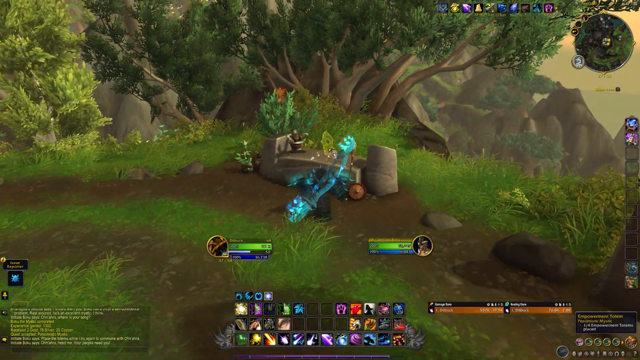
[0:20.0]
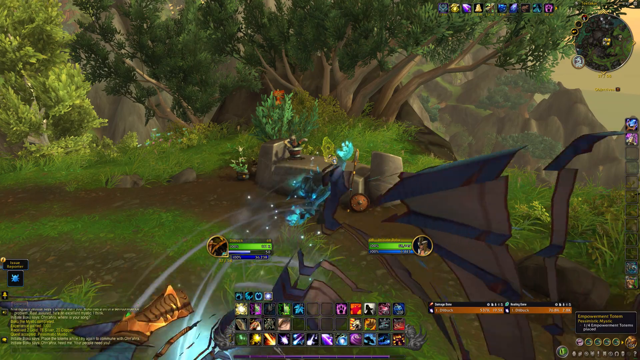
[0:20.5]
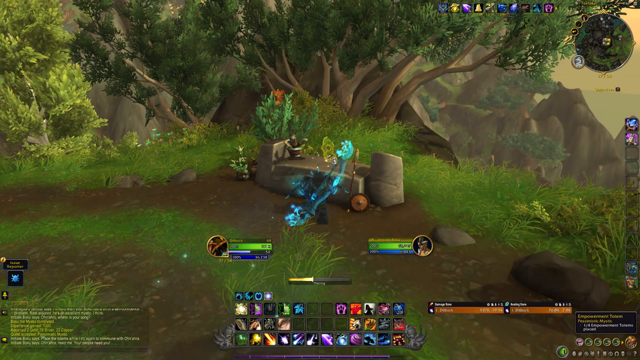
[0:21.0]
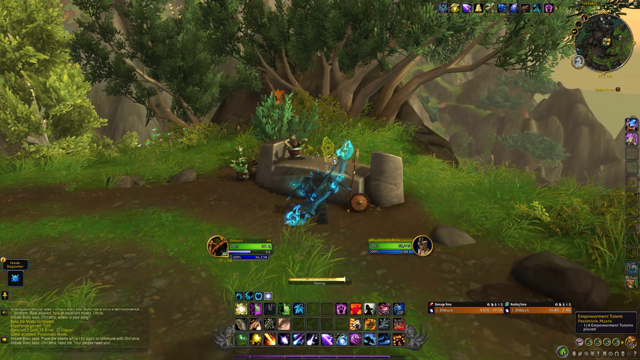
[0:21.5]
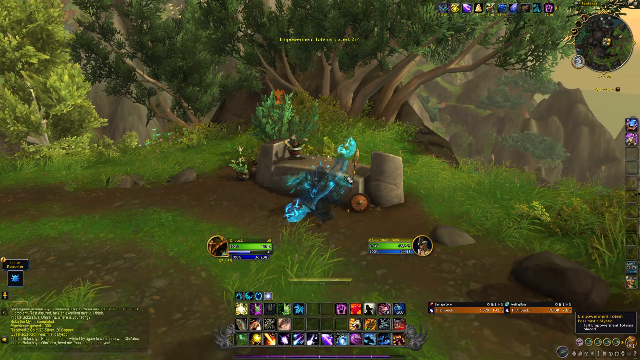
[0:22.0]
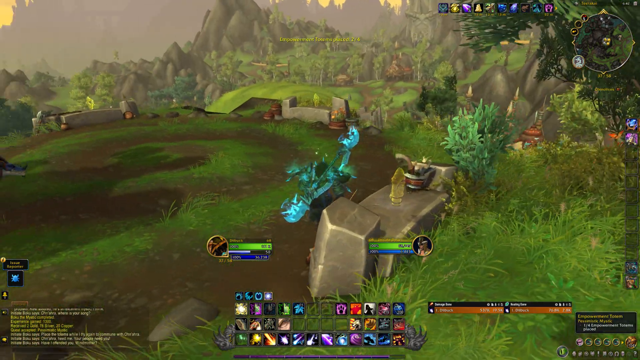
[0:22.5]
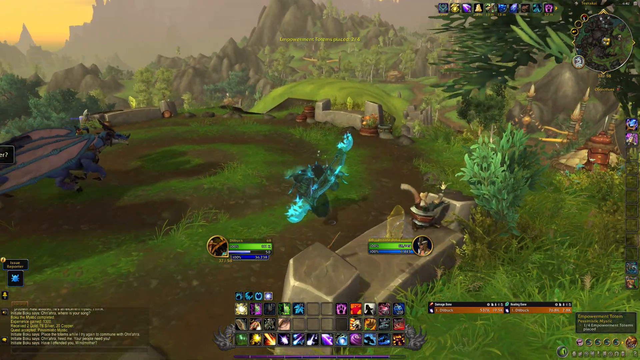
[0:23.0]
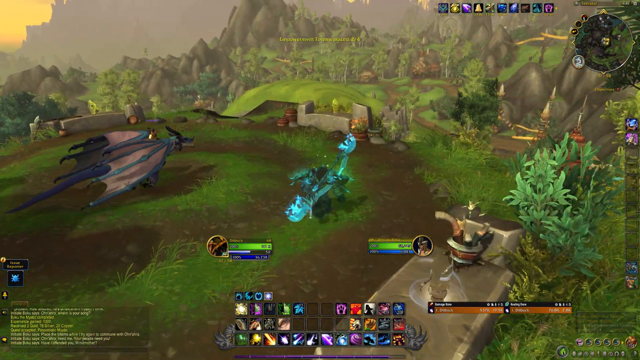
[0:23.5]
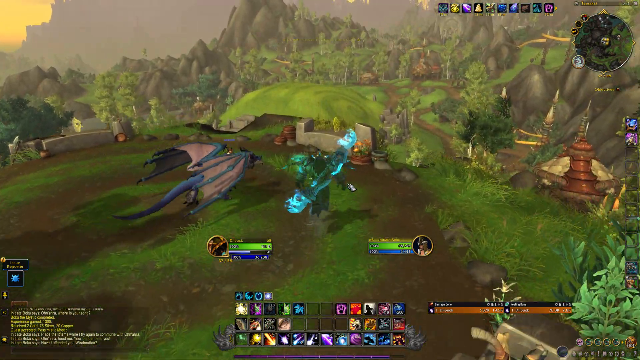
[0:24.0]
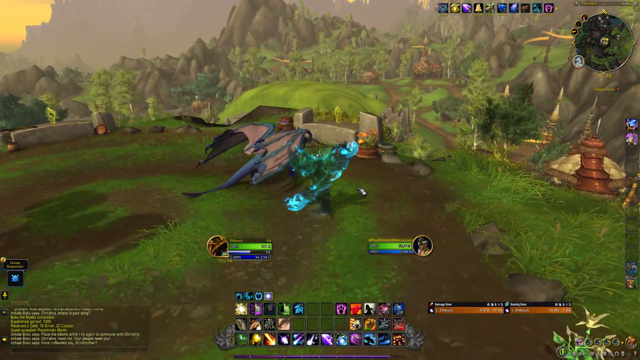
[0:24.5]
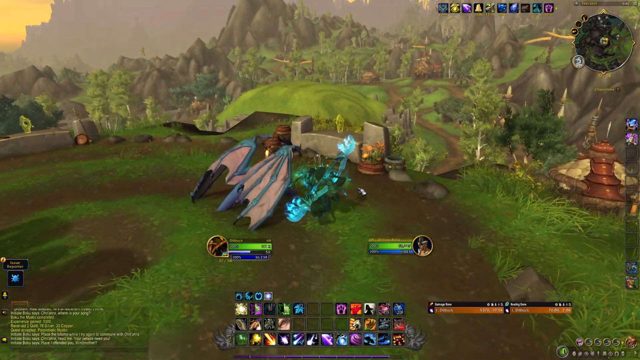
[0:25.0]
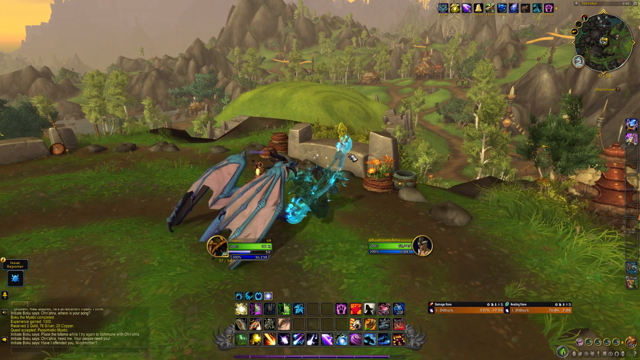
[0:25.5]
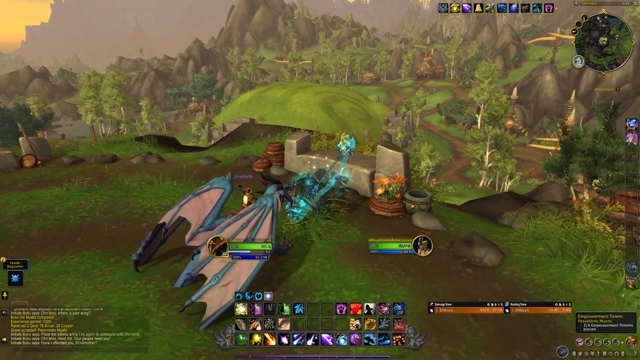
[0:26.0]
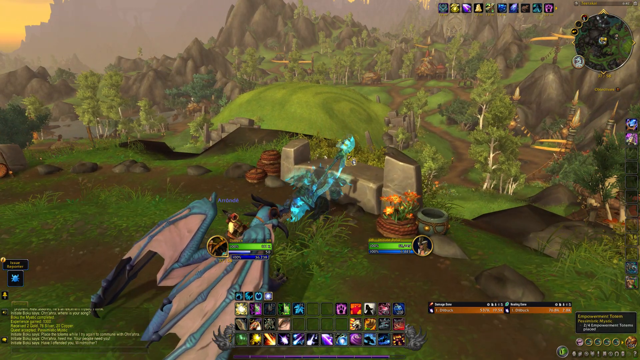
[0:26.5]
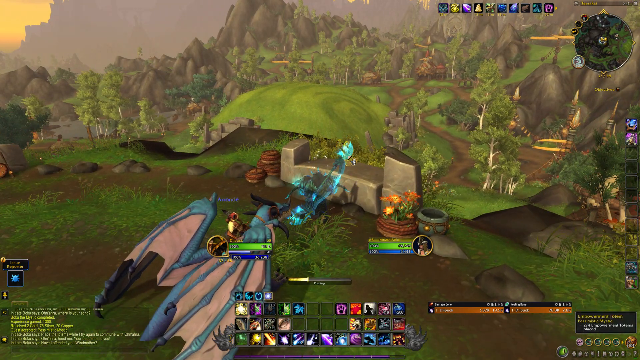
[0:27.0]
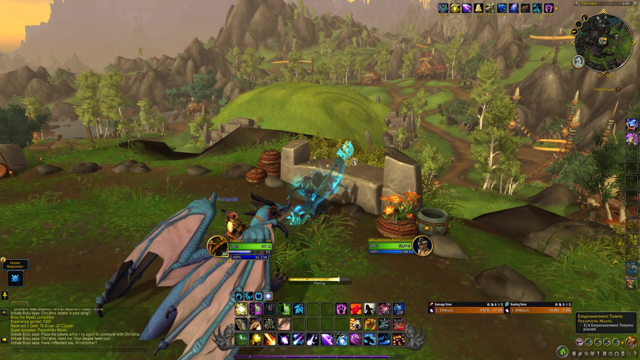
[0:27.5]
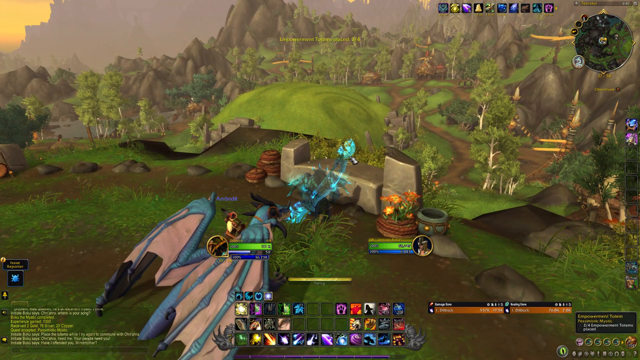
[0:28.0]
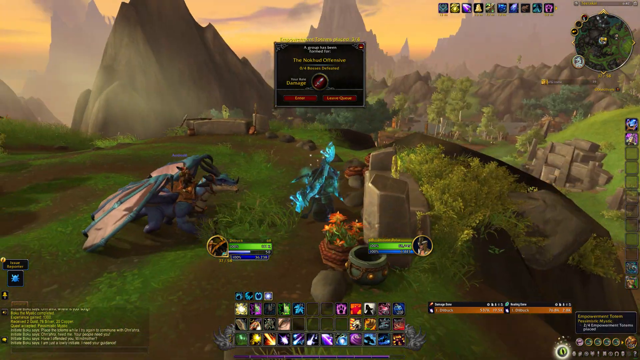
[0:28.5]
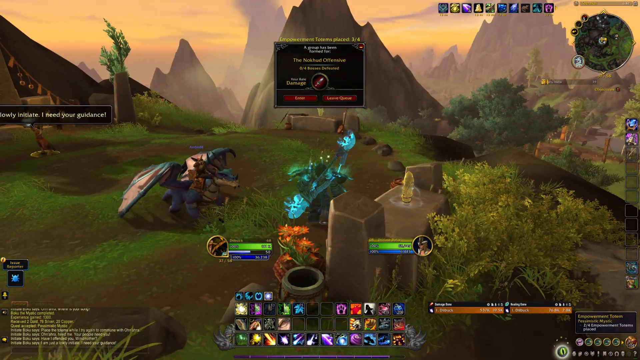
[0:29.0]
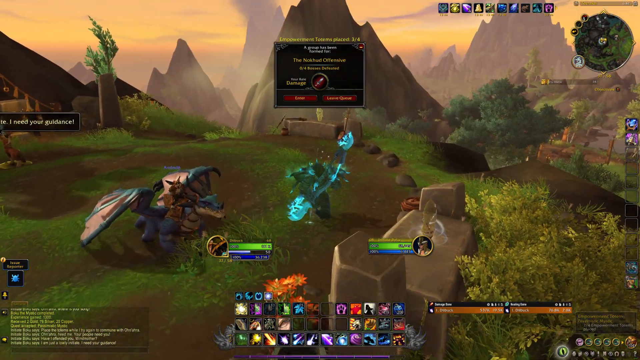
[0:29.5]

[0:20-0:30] The player starts at what appears to be the altar and appears to be taking stuff from it. Some form of golden bar fills up at the bottom, and then the player turns around. There appears to be some form of demonic dragon that has appeared and is moving around, but it does not move to attack the player. The player looks to be going towards another altar, and the golden bar again appears at the bottom. The setting appears to be the top of some form of mountain, with a view far off into the distance. The player remains ethereal blue and picks up something that cannot quite be made out; text apparently says "the Knock Hurt Offensive". The player then starts moving towards another altar, with the kind of brownish-black dragon demon thing stood in the middle of these altars, not moving to attack the player.